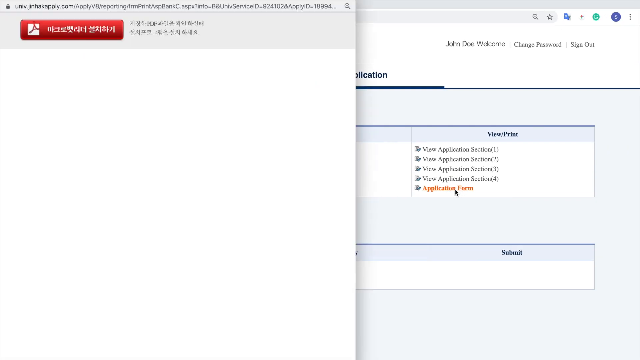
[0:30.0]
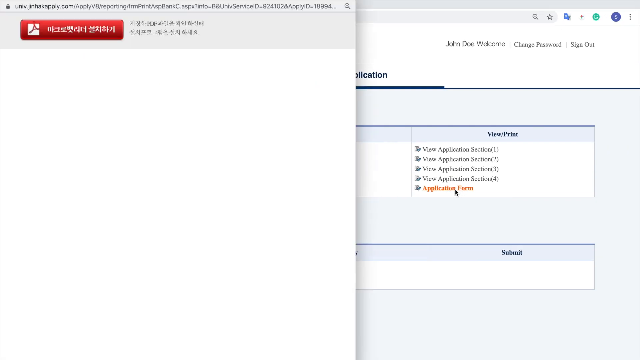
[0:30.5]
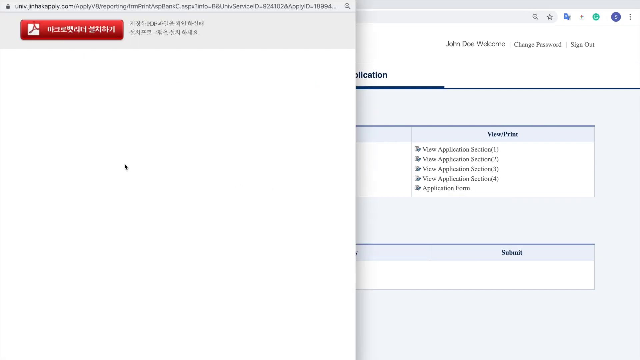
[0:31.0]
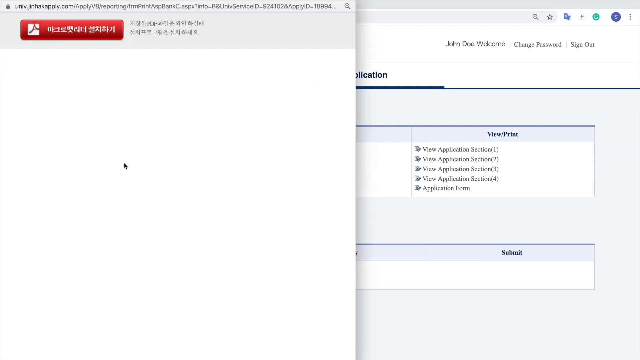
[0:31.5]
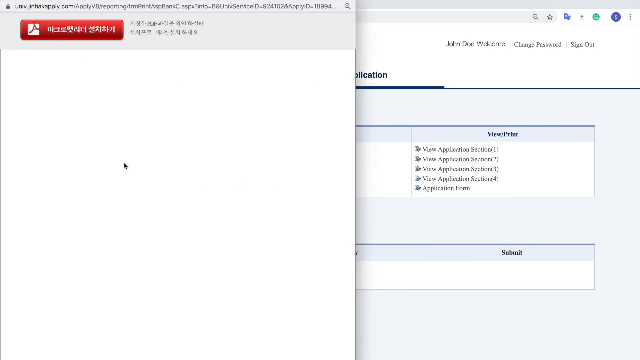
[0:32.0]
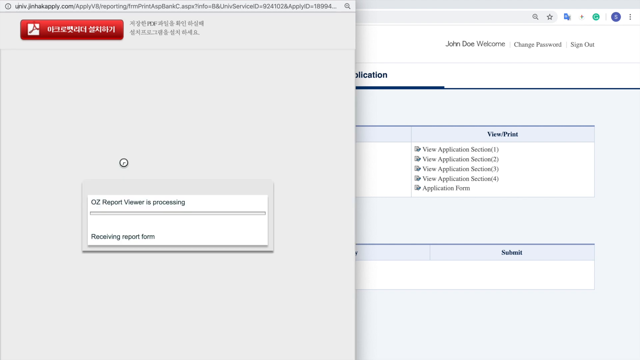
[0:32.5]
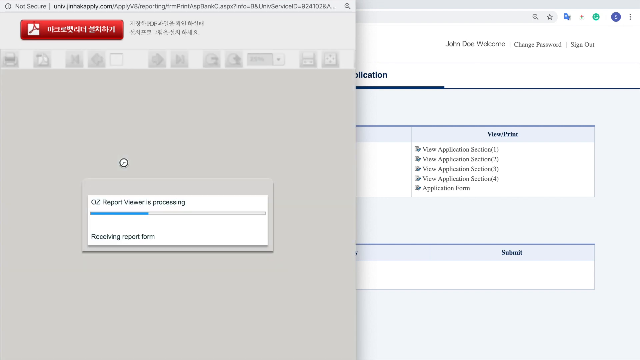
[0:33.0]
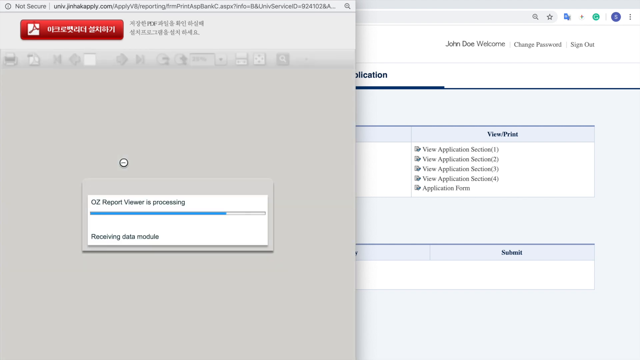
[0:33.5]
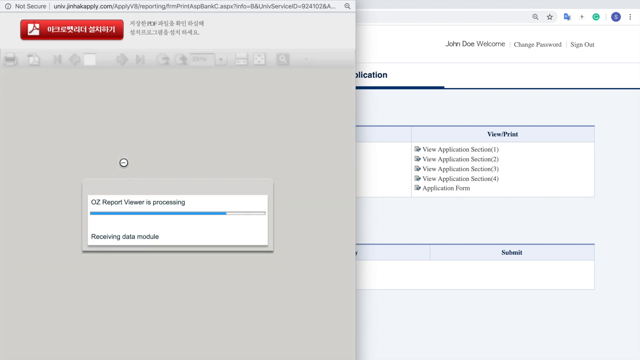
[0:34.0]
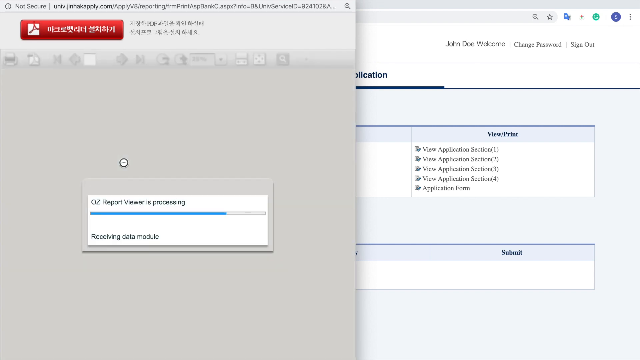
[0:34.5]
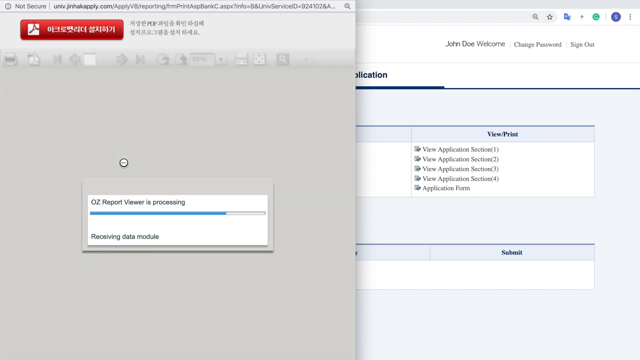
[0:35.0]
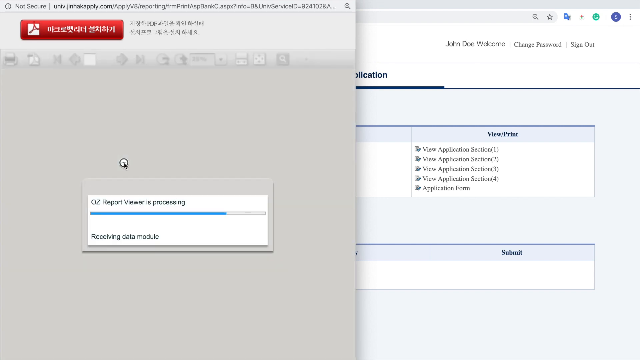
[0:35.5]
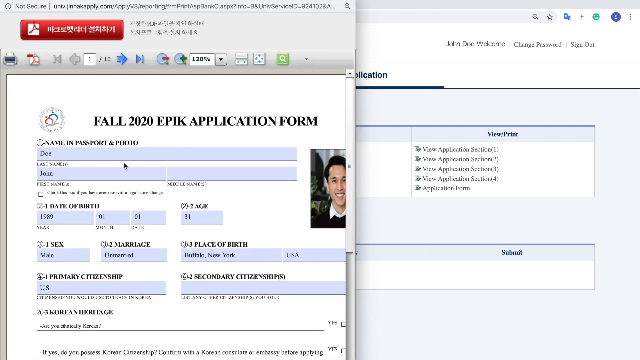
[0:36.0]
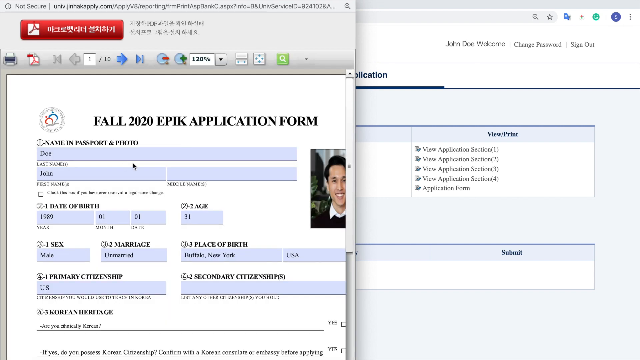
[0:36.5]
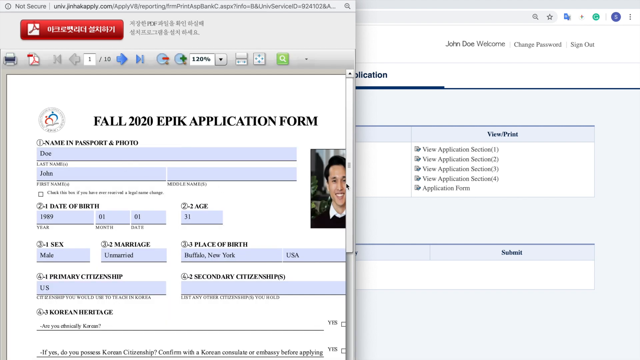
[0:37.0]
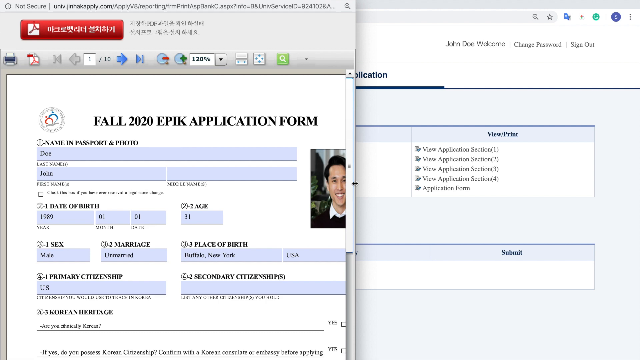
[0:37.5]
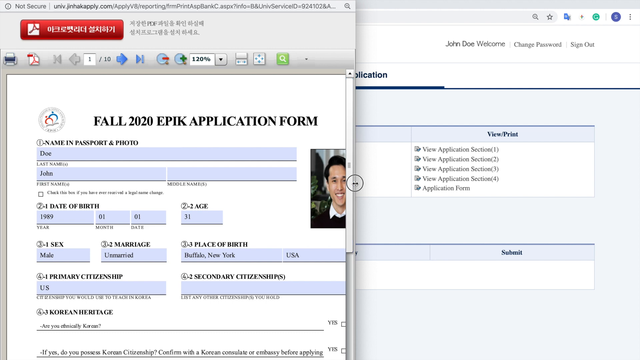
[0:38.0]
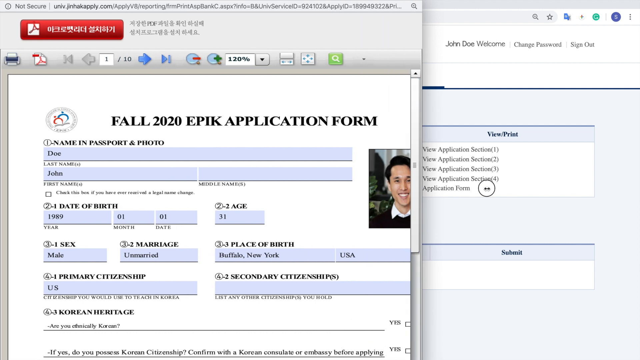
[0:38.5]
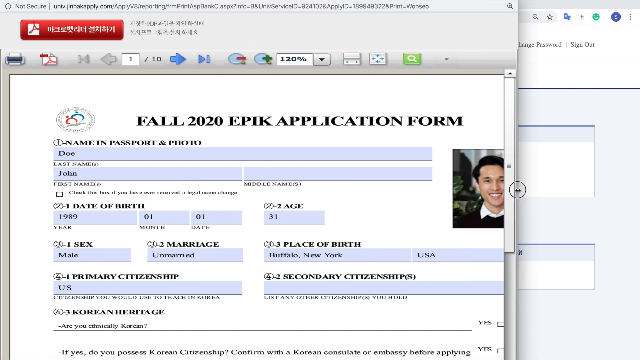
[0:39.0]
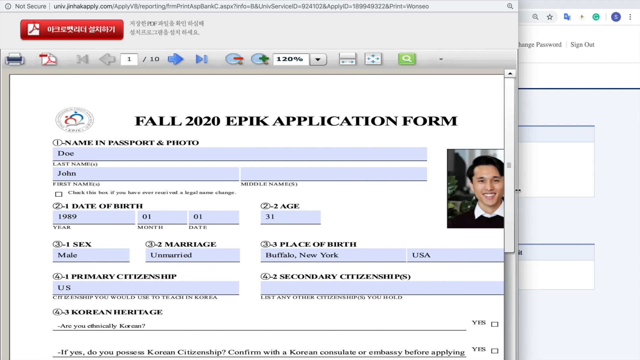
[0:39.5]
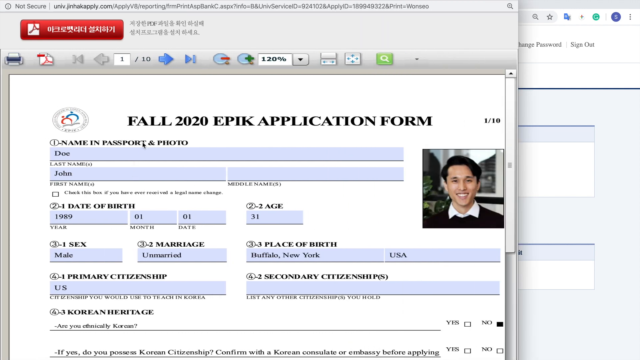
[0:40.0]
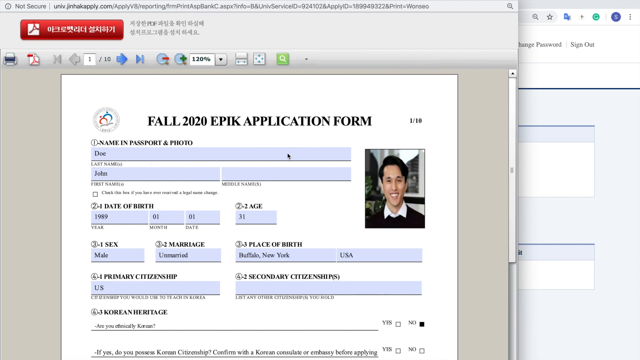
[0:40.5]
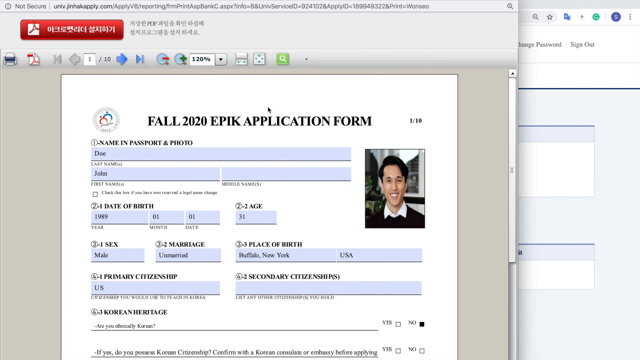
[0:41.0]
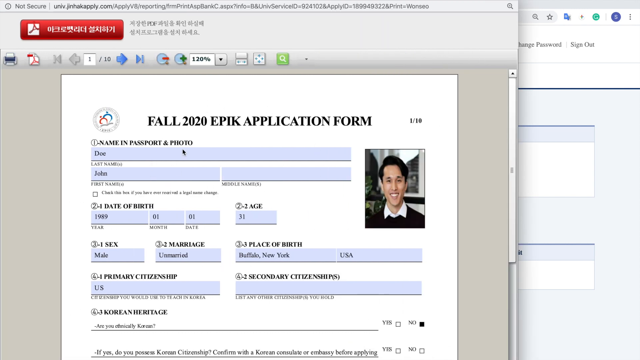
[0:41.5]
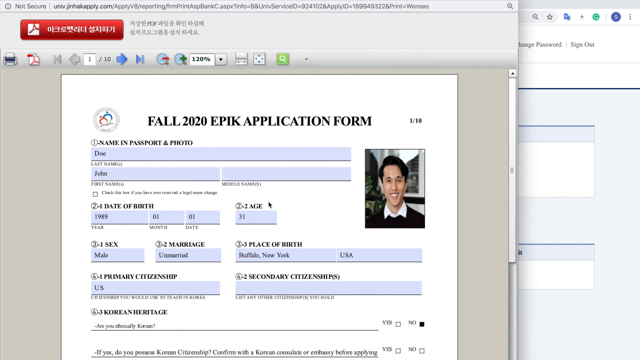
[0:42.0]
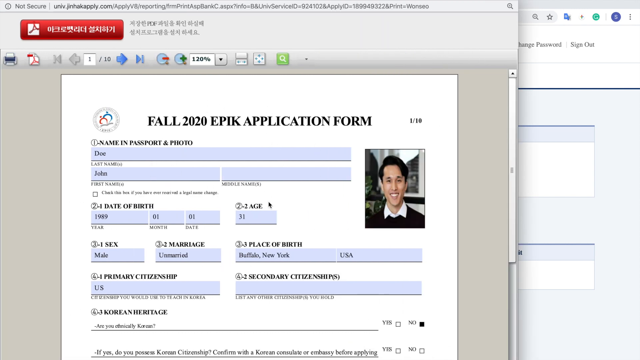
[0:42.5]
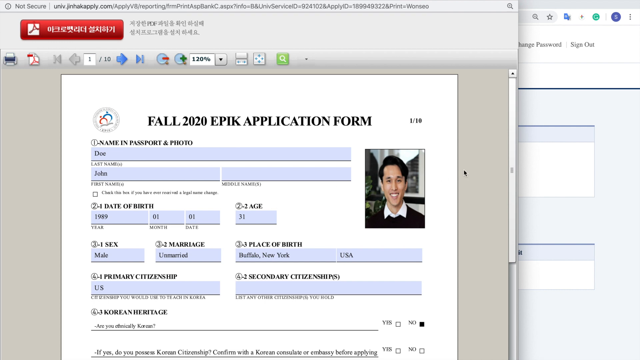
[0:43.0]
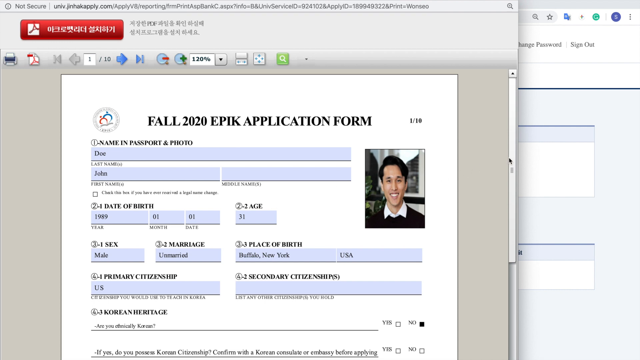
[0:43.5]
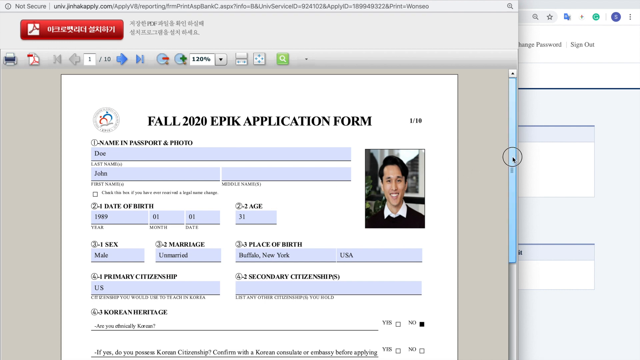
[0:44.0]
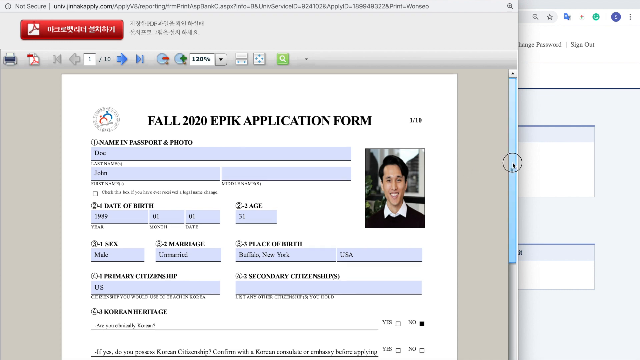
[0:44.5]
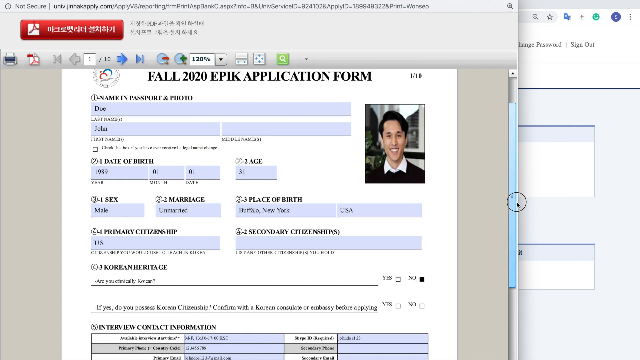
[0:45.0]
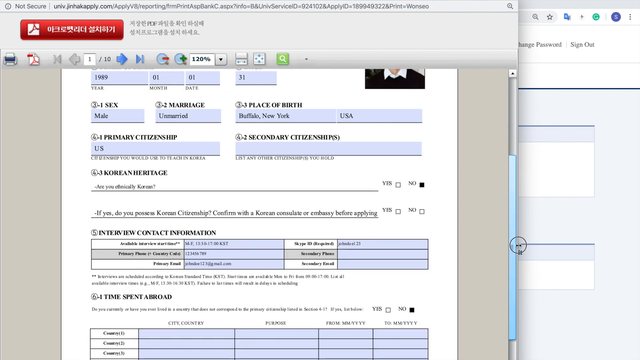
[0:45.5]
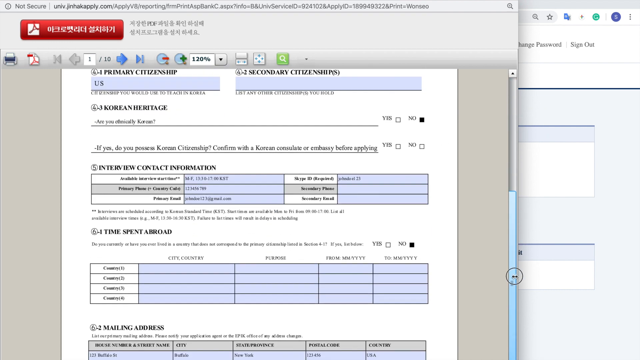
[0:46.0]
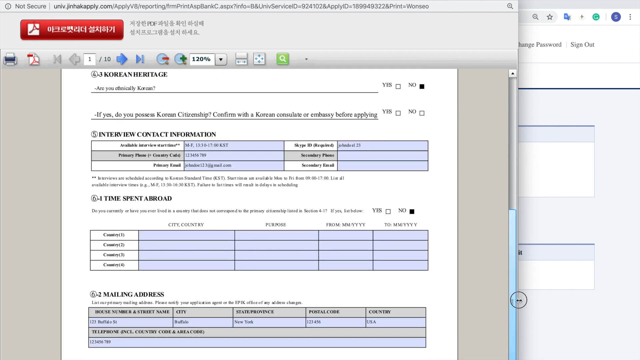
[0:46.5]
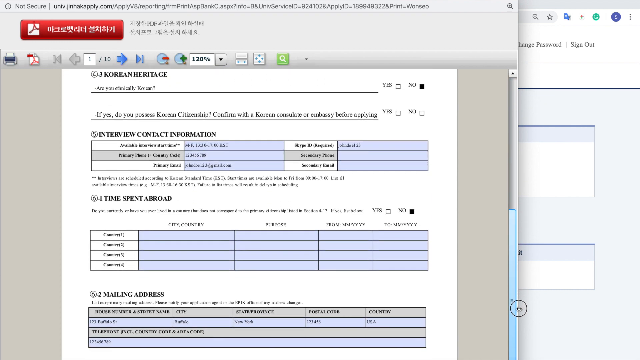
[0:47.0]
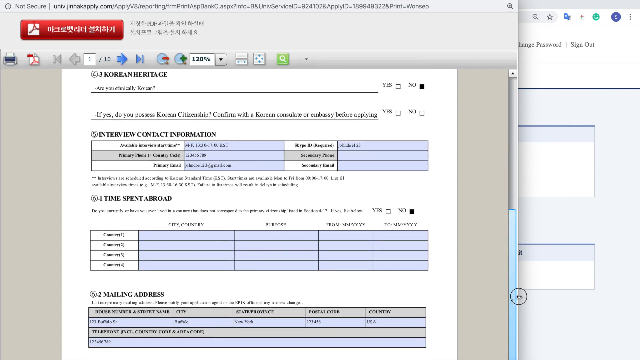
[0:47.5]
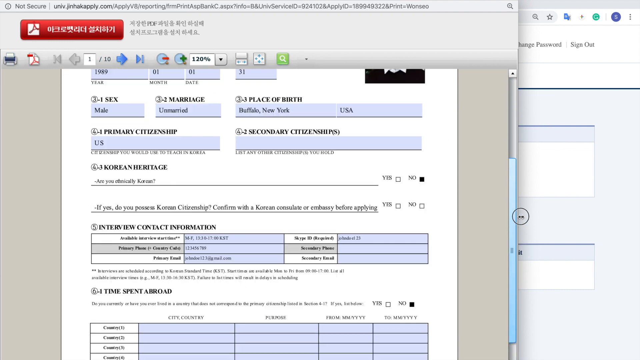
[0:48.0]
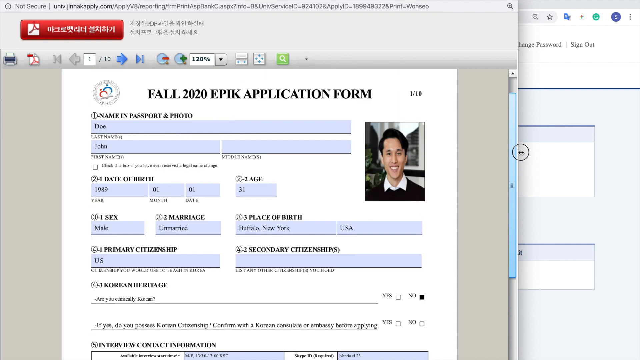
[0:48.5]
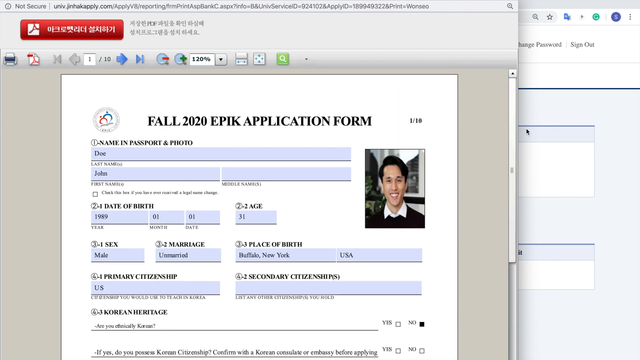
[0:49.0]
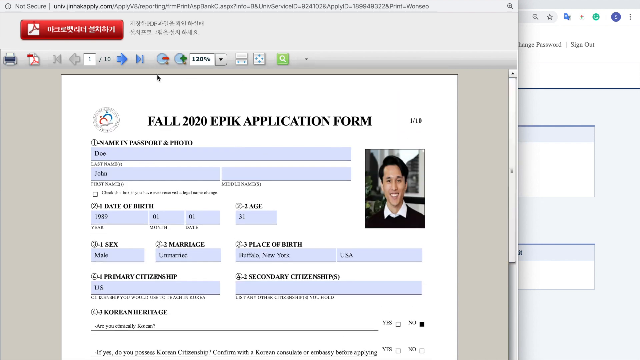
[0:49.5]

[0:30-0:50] The EPIK Guest English Teacher Recruiting website is pulled up. An Adobe window appears with text at the top in another language, Chinese or Japanese, and an OZ report viewer shows as processing. The Fall 2020 EPIK application form then appears, on the name, passport and photo section. The last name is Doe and the first name John, with no middle initial. The date of birth is 1989, first month, first day. Sex is male, marriage is unmarried, and primary citizenship is US. At the bottom it says "Korean heritage". On the right side, the age is 31, and the place of birth is Buffalo, New York, USA.